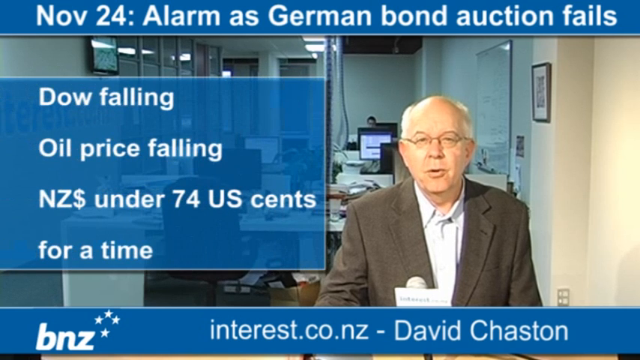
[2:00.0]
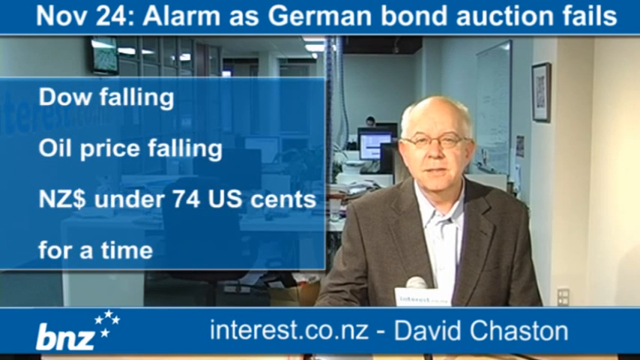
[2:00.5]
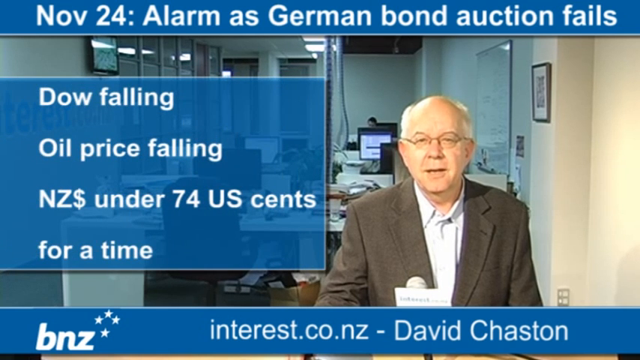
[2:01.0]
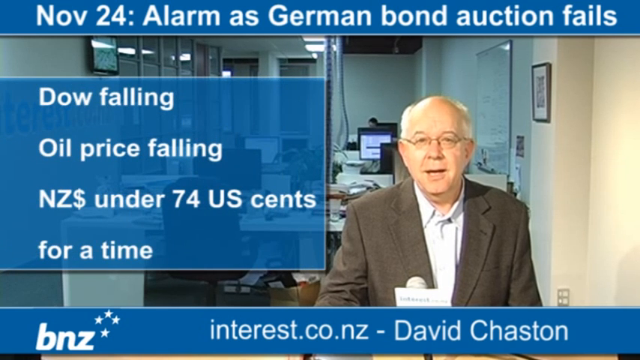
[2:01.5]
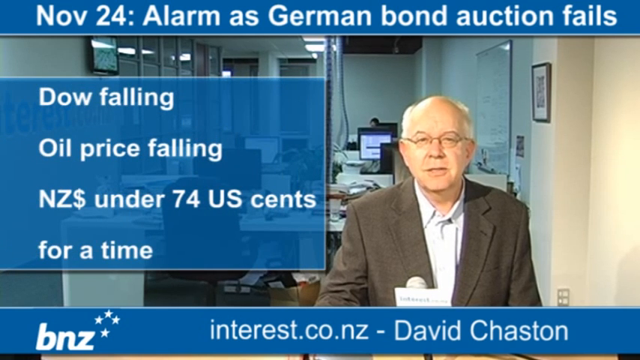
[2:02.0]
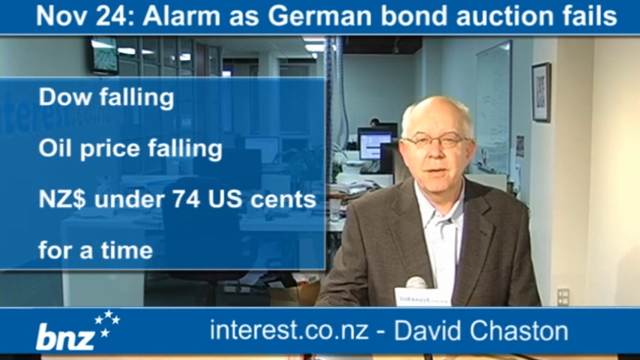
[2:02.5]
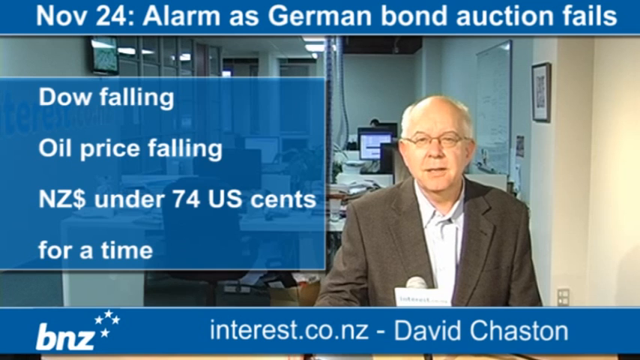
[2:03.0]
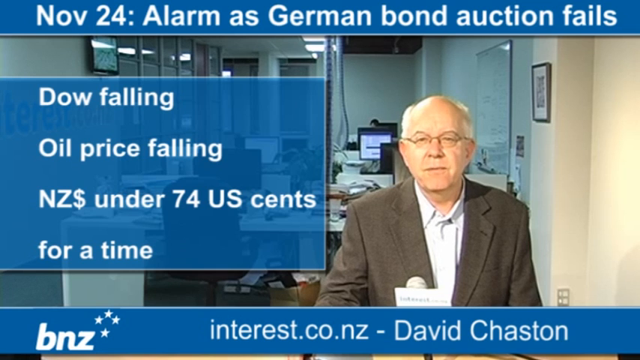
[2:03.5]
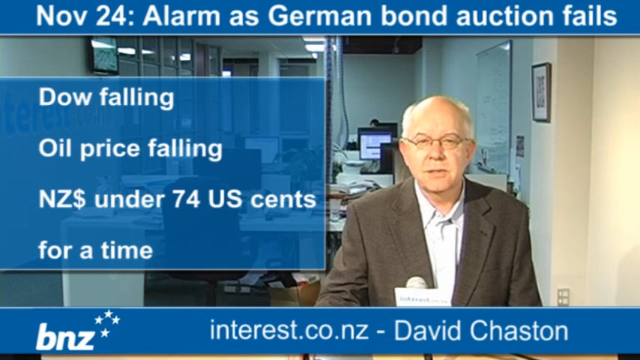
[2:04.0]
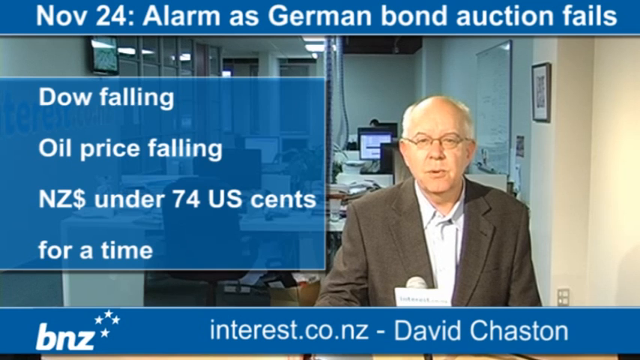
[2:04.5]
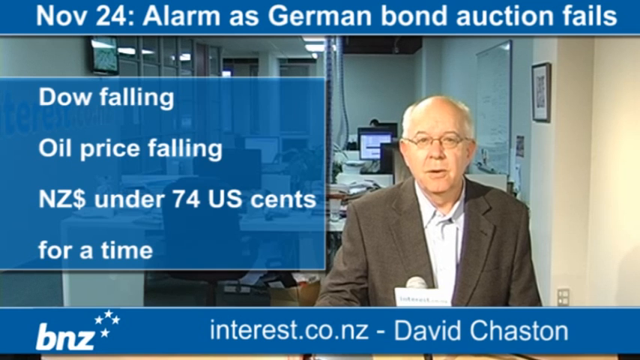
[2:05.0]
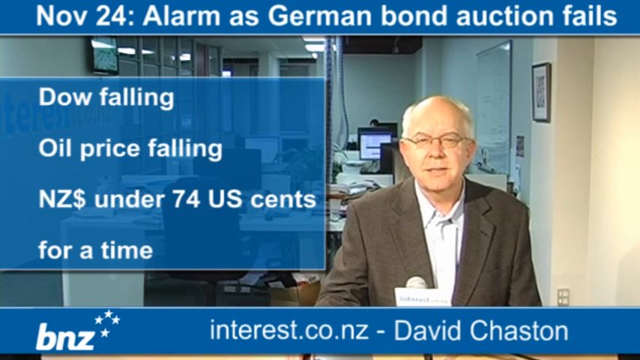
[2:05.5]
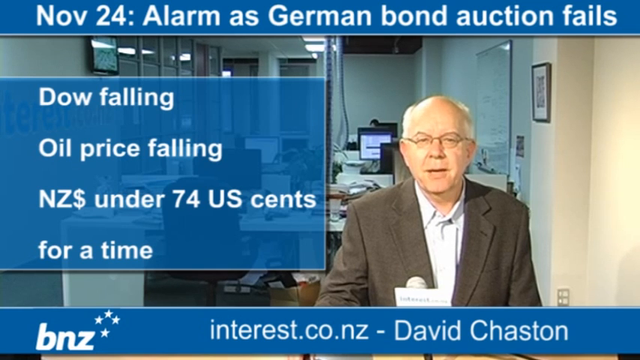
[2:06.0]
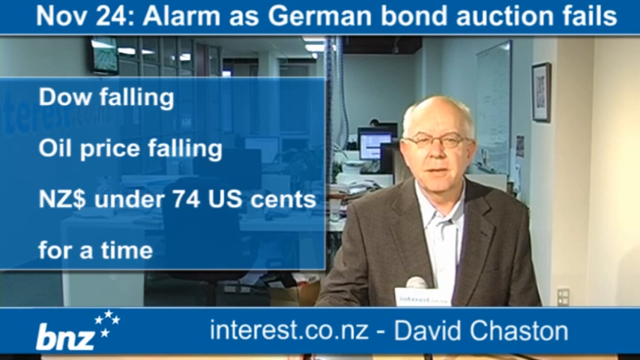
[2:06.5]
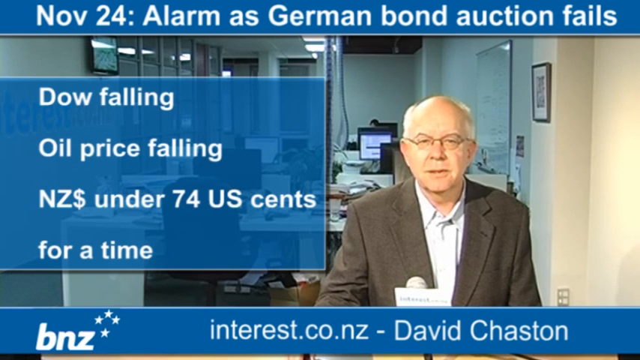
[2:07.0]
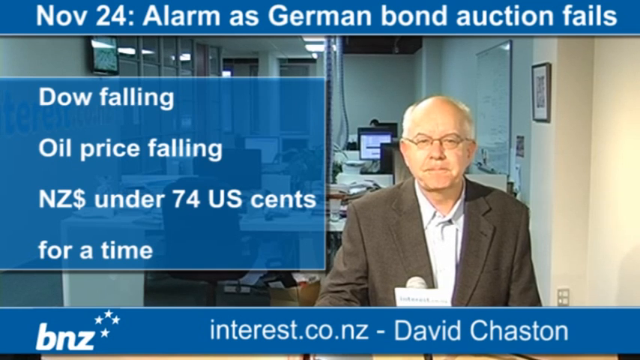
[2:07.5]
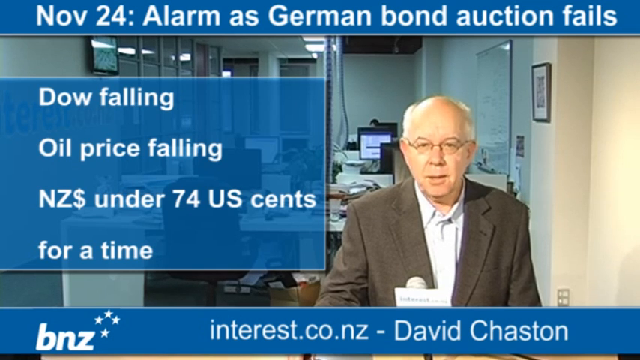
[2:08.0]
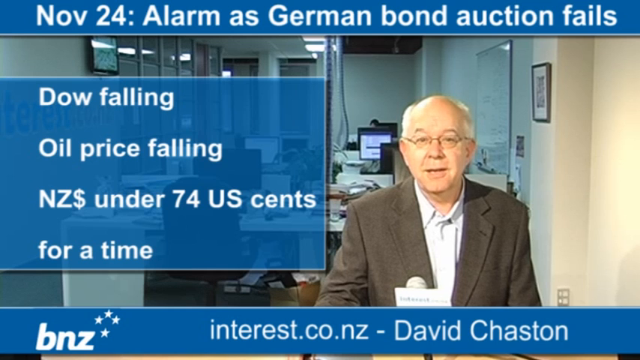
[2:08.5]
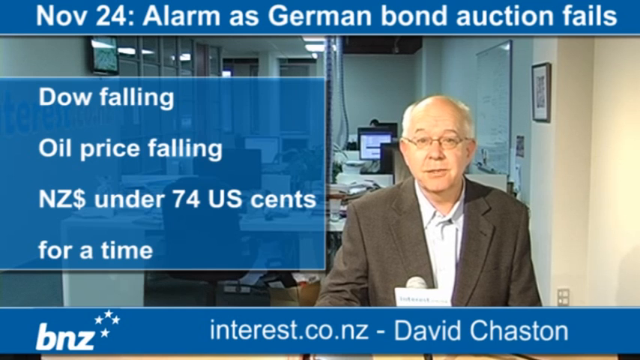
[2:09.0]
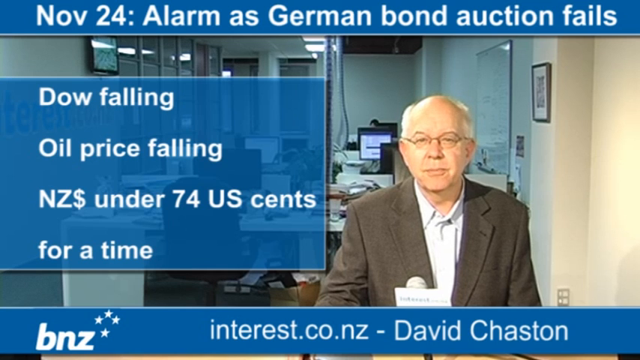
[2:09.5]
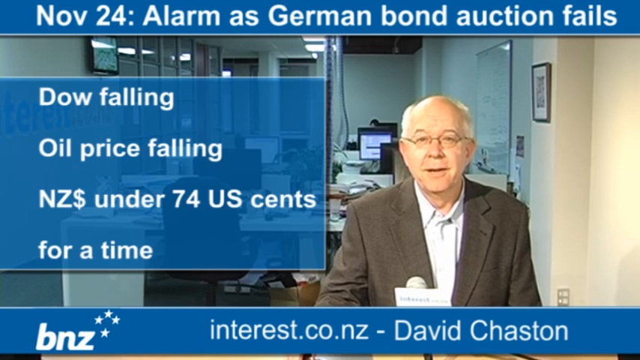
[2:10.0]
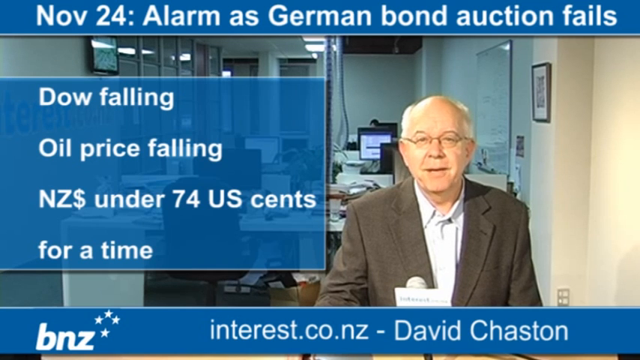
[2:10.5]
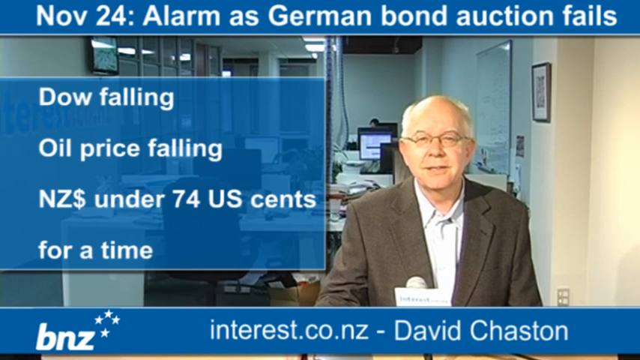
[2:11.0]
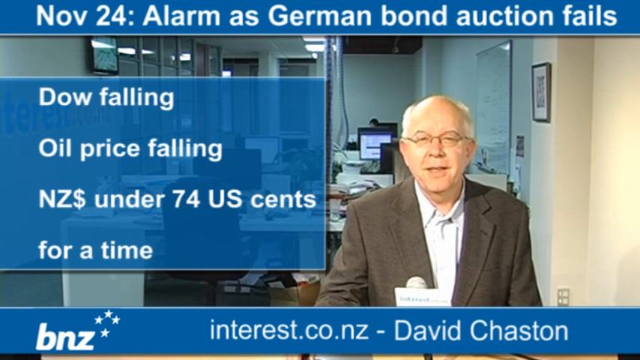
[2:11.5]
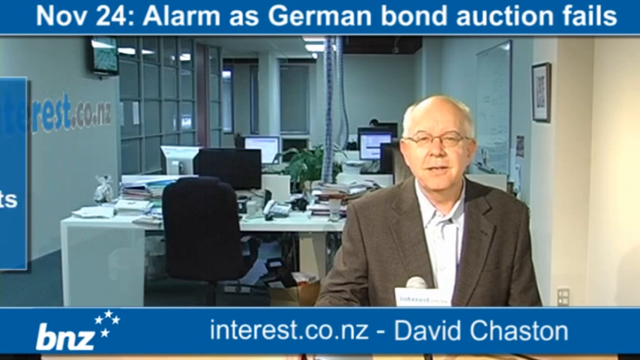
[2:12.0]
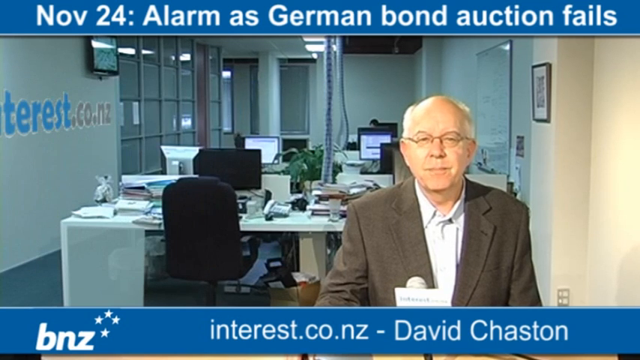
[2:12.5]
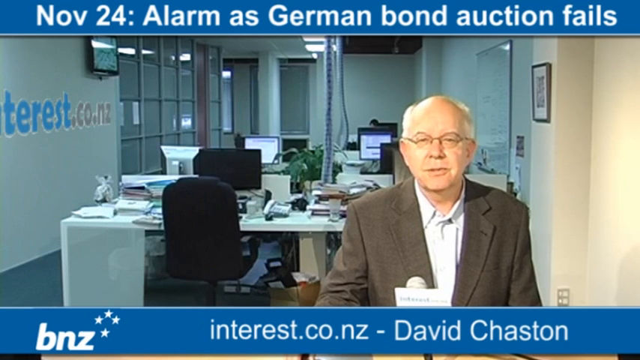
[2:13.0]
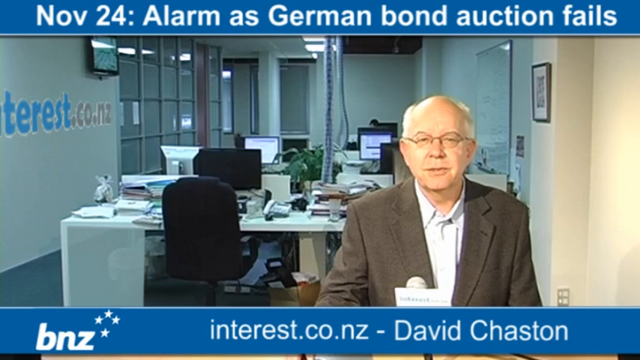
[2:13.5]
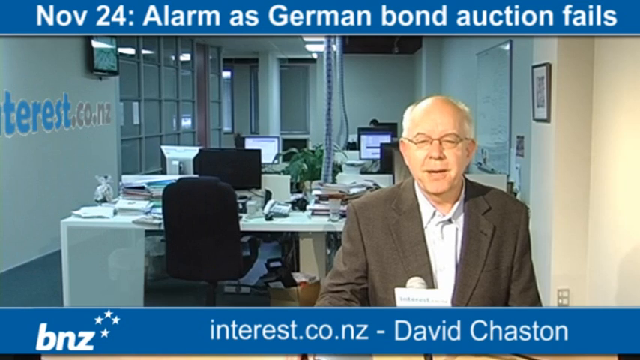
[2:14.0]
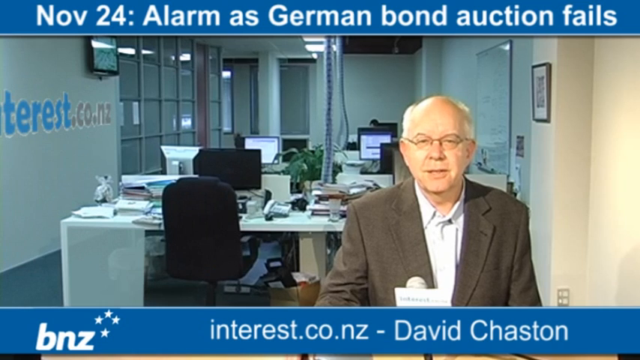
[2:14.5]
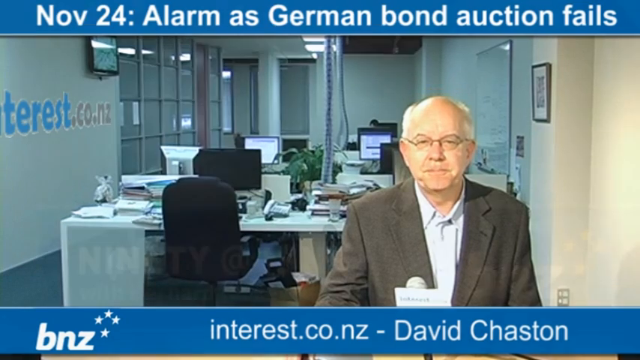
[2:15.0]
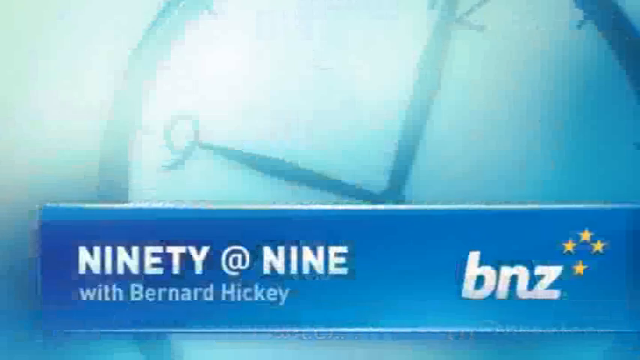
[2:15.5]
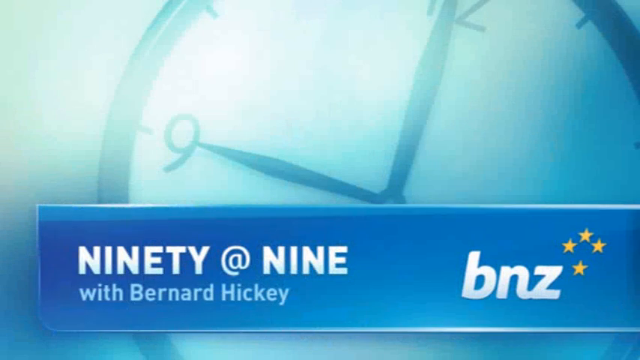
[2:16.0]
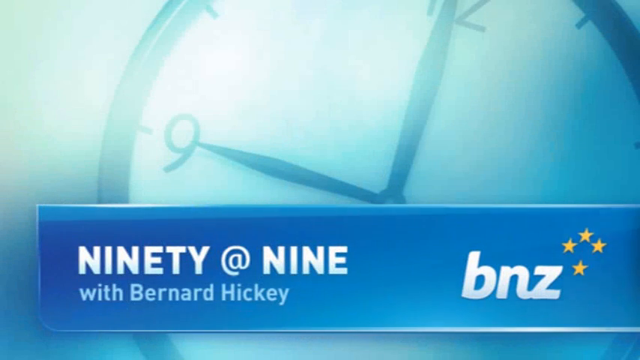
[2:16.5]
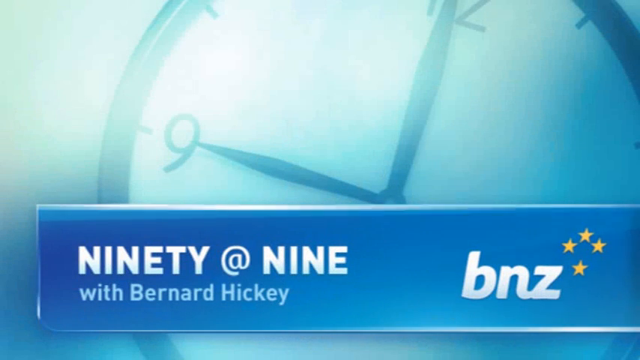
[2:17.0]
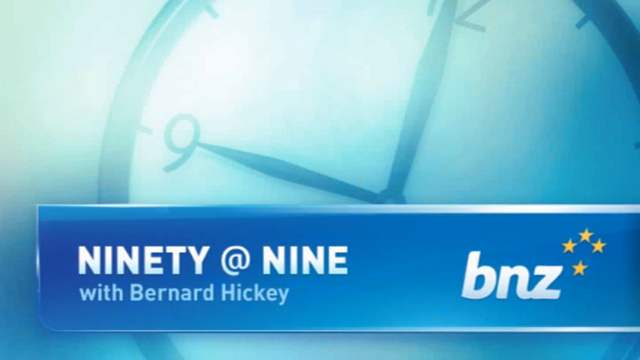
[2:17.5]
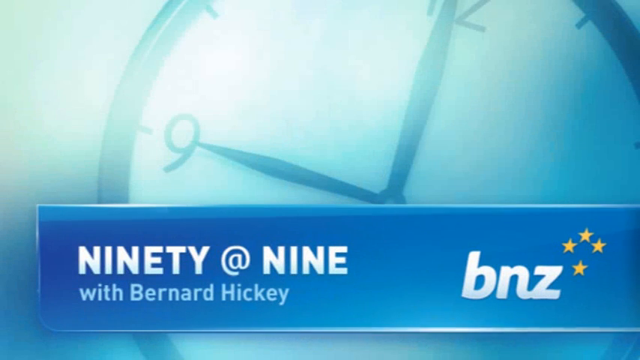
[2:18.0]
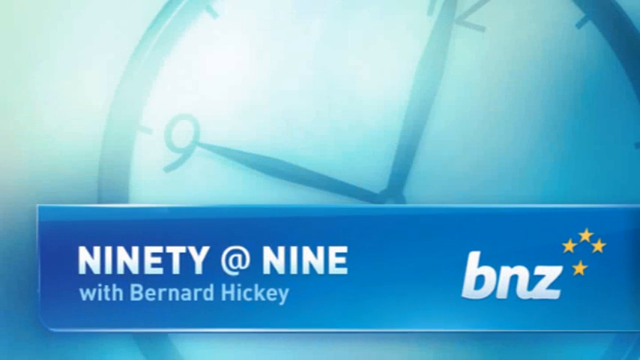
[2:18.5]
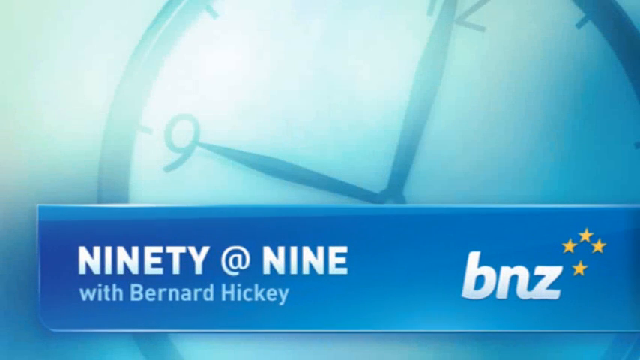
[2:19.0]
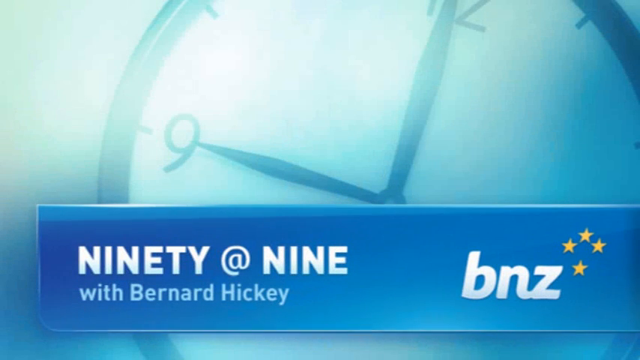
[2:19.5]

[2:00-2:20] The text reads "oil price falling, New Zealand under 74 US cents for a time," and at the top it still says "November 24th" and "German bond auction fails." The man keeps talking to the mic and smiles a little. The program, apparently titled 90 at 9, then comes to an end. There is no news footage or newsreel at any point, only the man speaking.